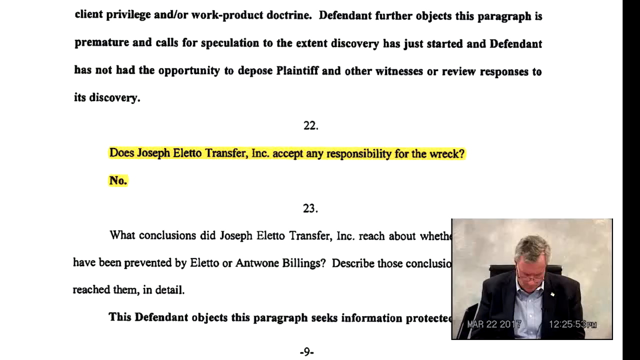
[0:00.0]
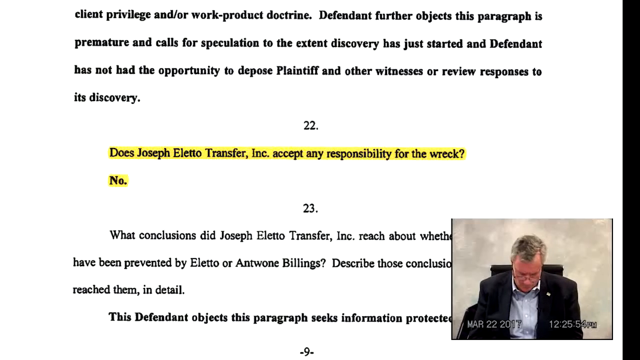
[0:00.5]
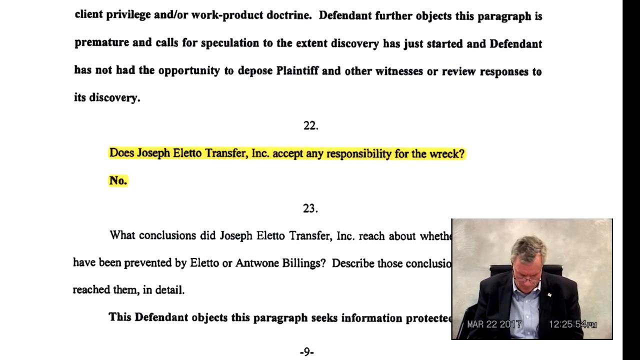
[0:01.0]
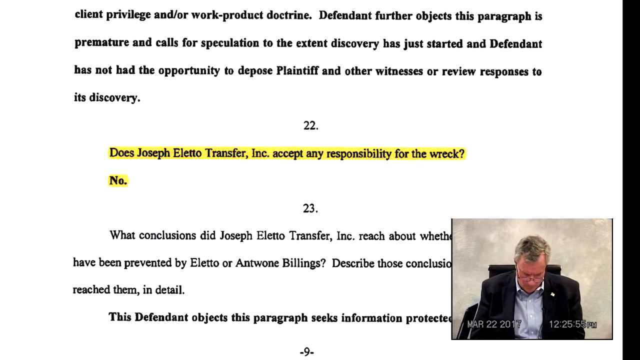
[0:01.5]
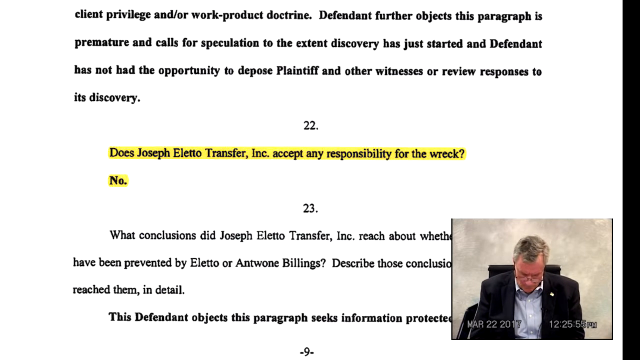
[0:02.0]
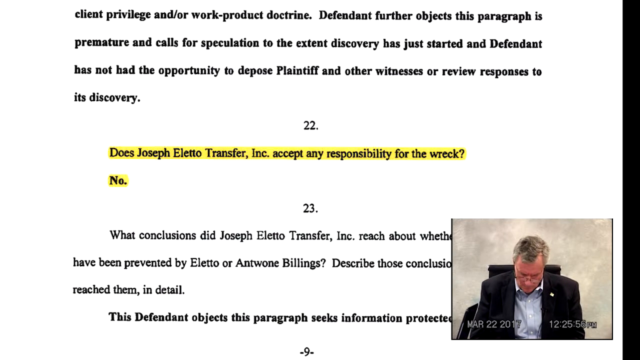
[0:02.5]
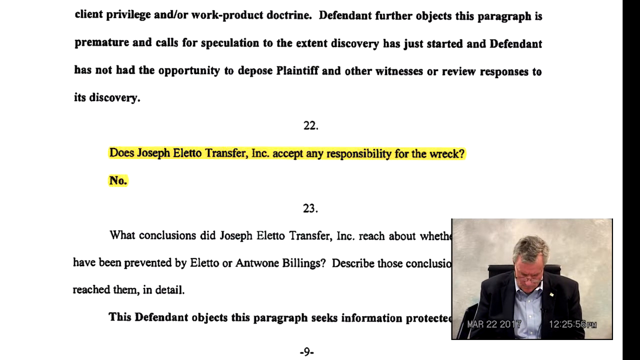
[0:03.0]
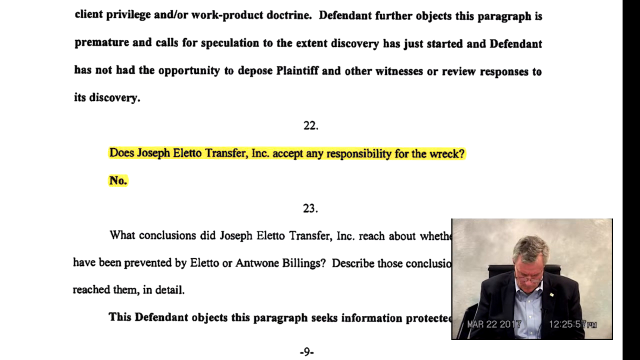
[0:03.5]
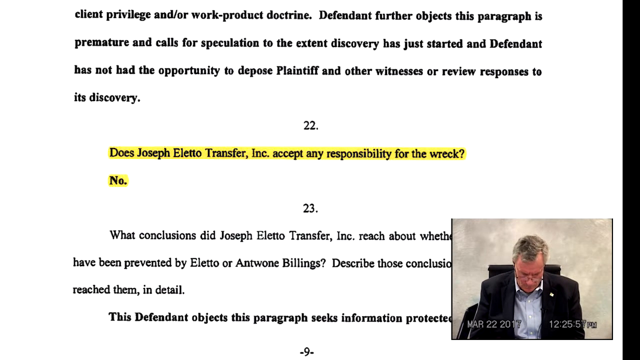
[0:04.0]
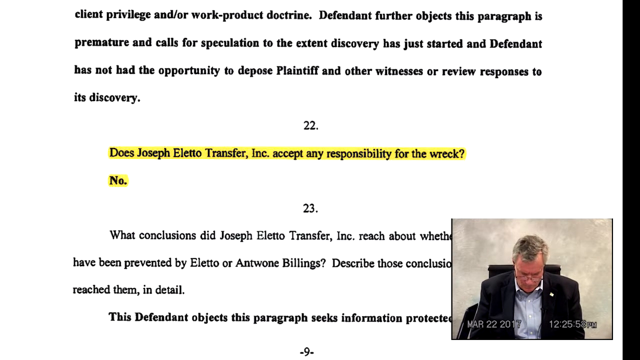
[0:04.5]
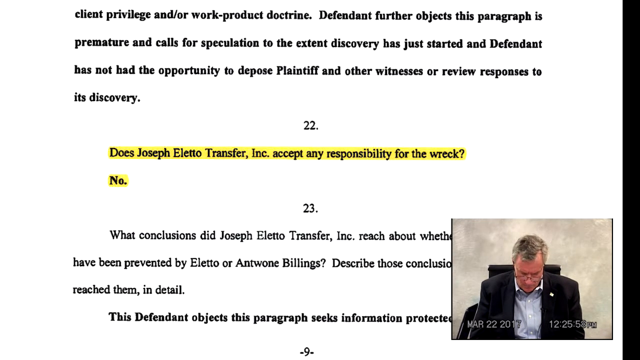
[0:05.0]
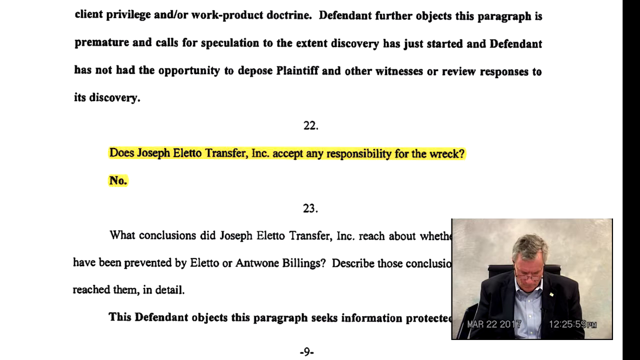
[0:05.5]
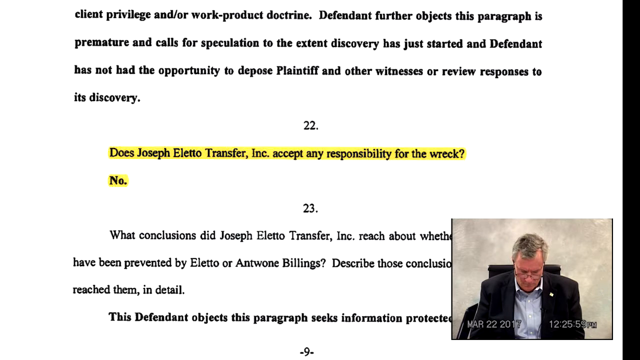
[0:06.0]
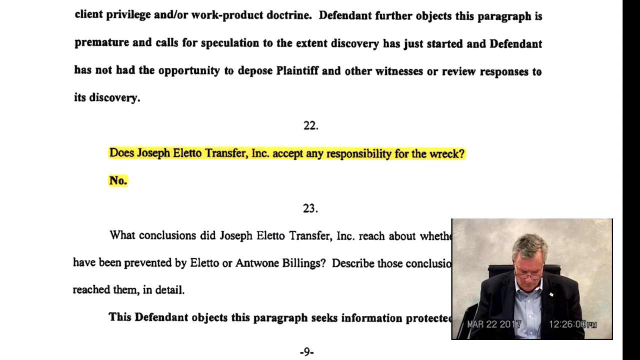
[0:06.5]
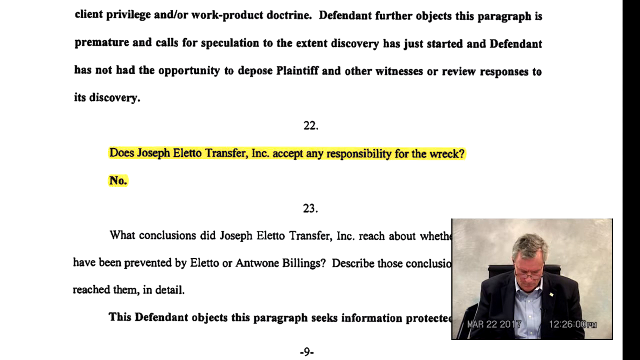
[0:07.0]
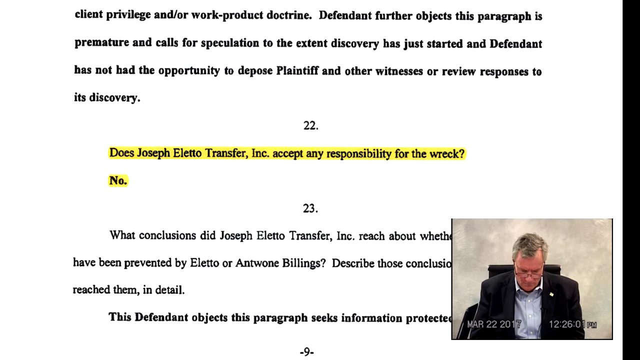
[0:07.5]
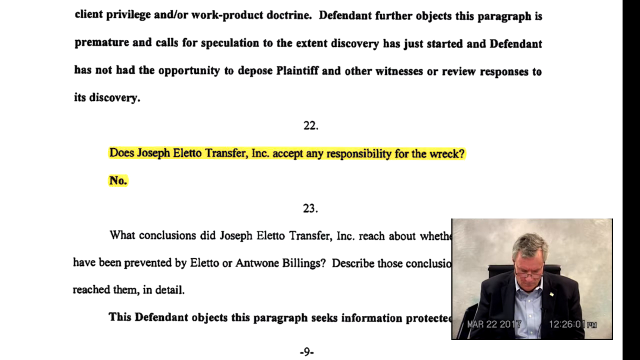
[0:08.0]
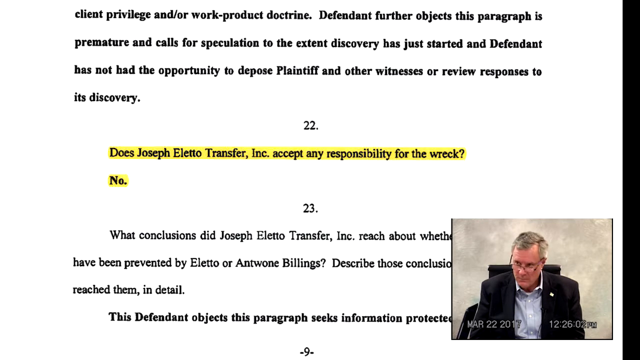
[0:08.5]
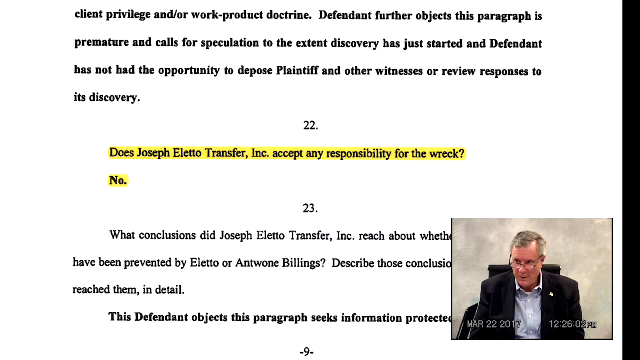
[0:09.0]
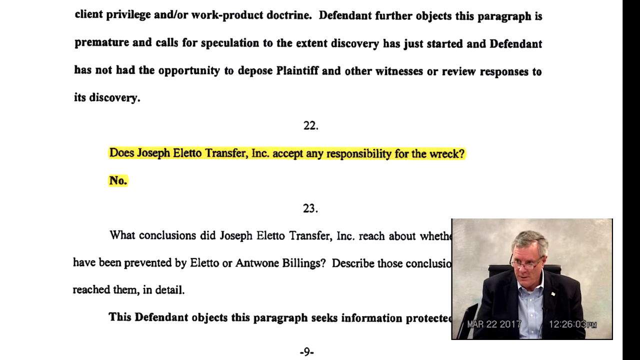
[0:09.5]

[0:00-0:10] The screen shows what seems to be a paragraph written about a man named Joseph Ello, who is presumably the person in the photo at the bottom right. Some of the lines read: "defendant further objects this paragraph is premature and calls for speculation to the extent discovery has just started and defendant has not had opportunity to depose plaintiff and other witness or review responses to discovery." A question follows, ending "accept any responsibility for the wreck?" with the answer "No." The photo covers the sentences at the bottom, so those lines are hard to see.